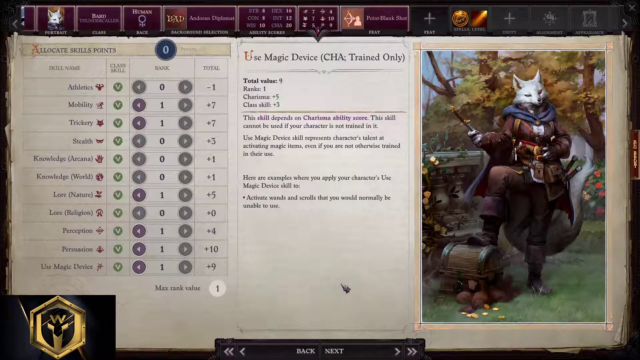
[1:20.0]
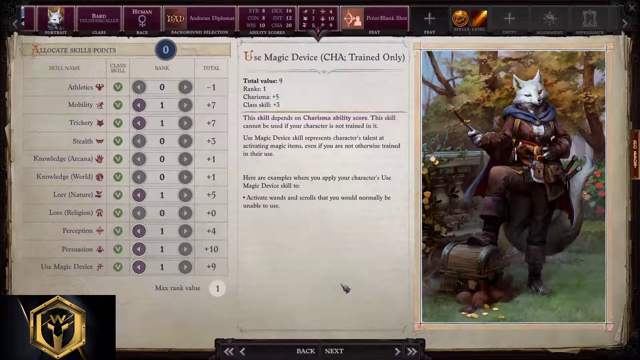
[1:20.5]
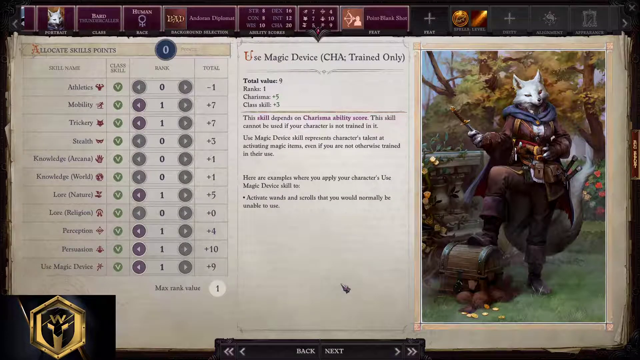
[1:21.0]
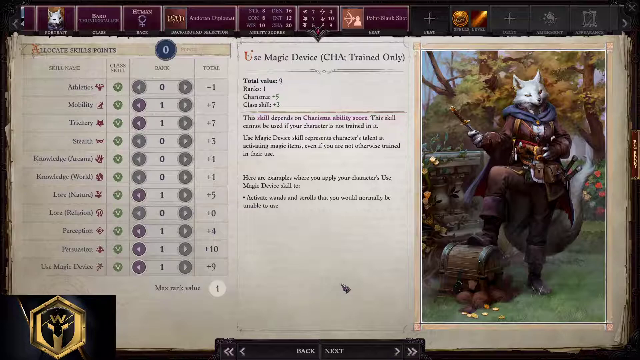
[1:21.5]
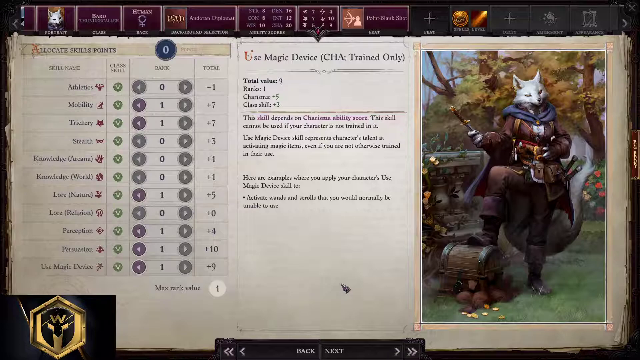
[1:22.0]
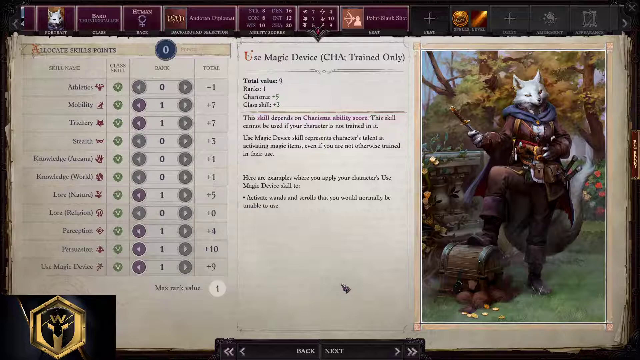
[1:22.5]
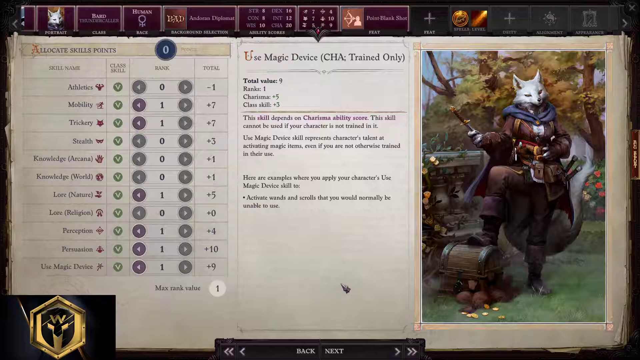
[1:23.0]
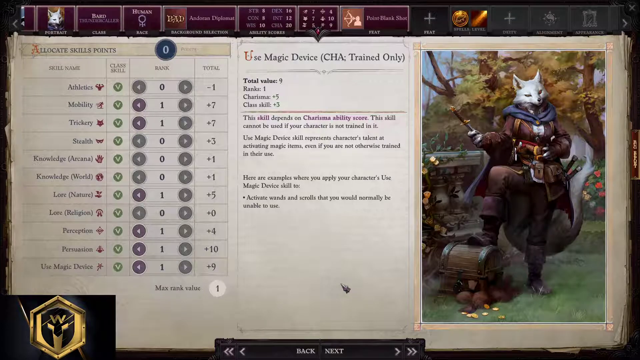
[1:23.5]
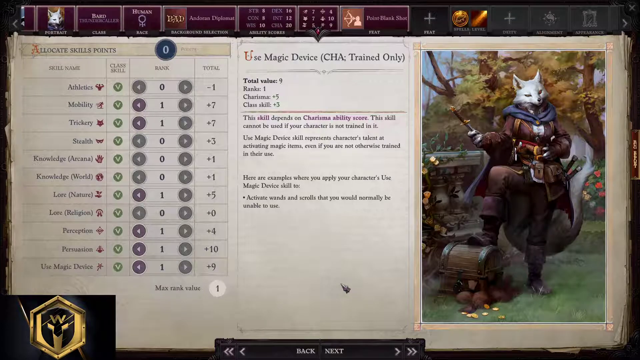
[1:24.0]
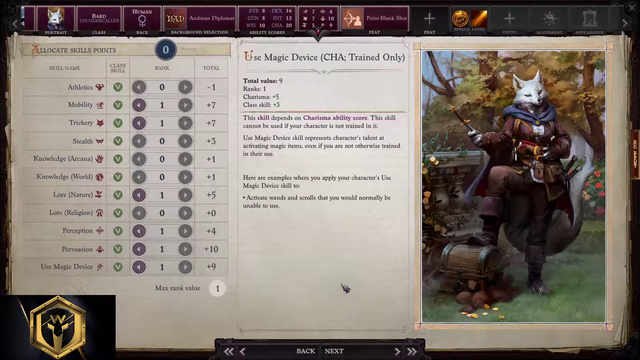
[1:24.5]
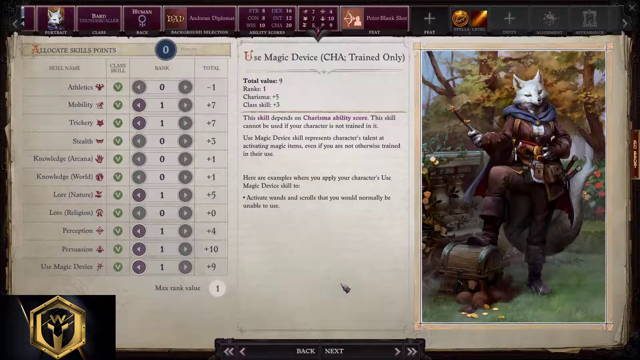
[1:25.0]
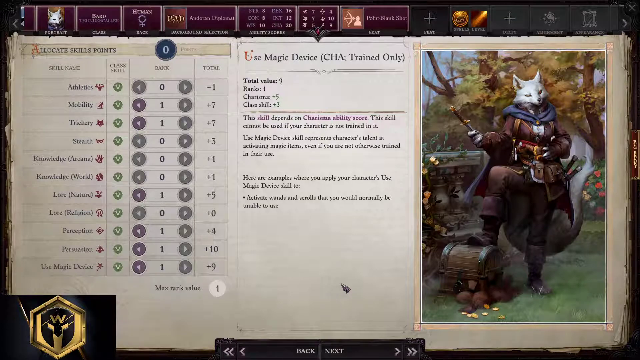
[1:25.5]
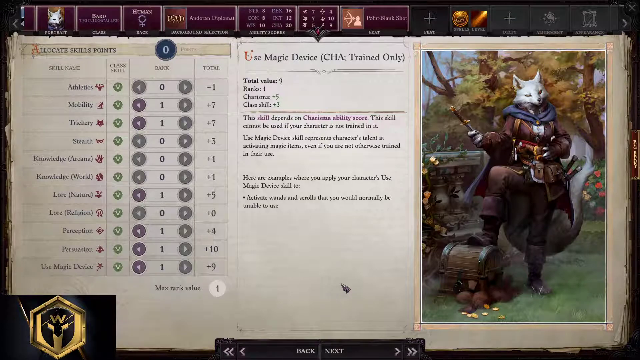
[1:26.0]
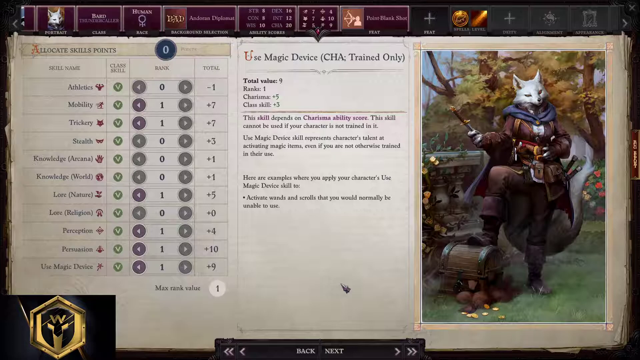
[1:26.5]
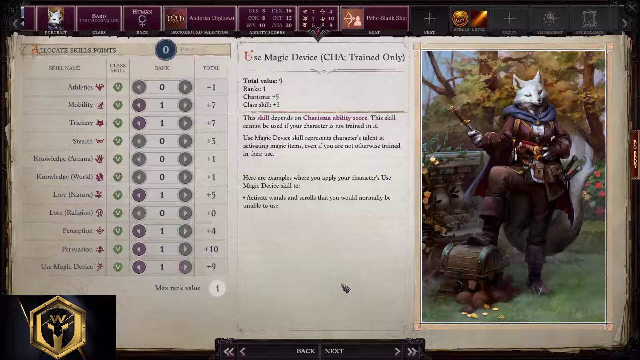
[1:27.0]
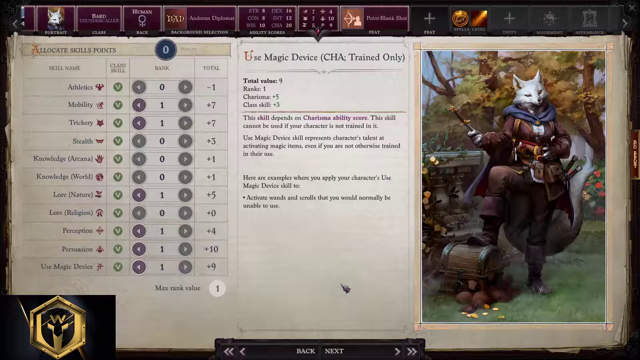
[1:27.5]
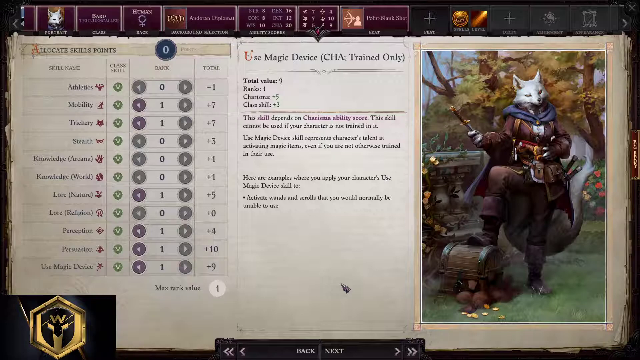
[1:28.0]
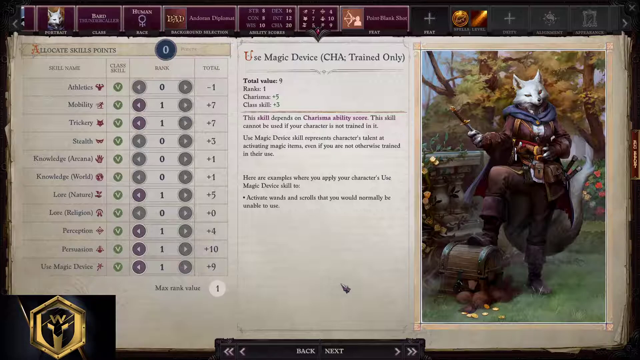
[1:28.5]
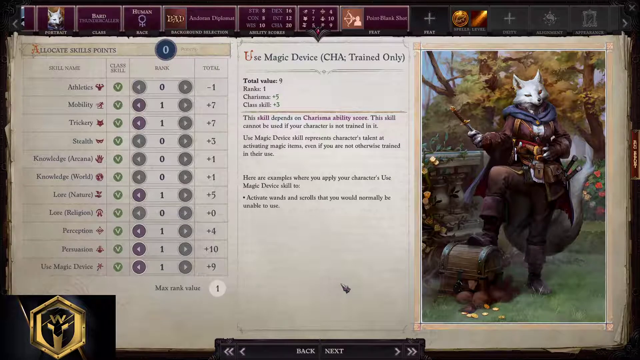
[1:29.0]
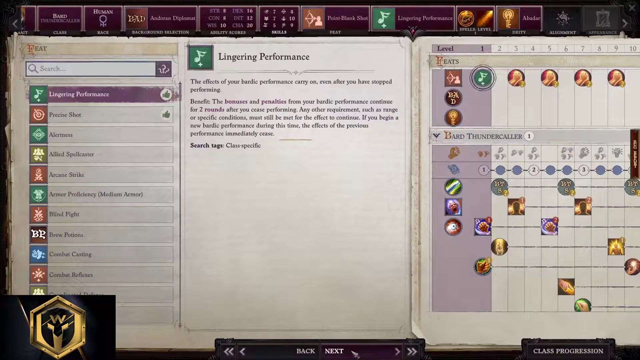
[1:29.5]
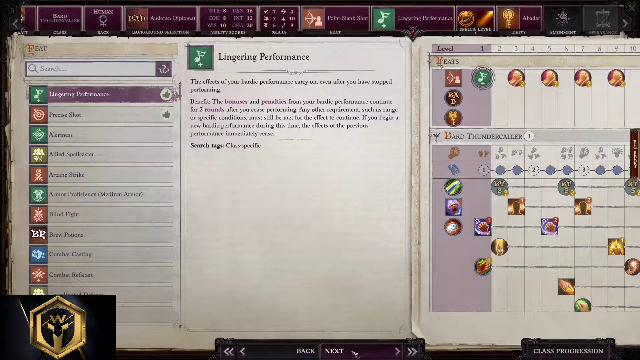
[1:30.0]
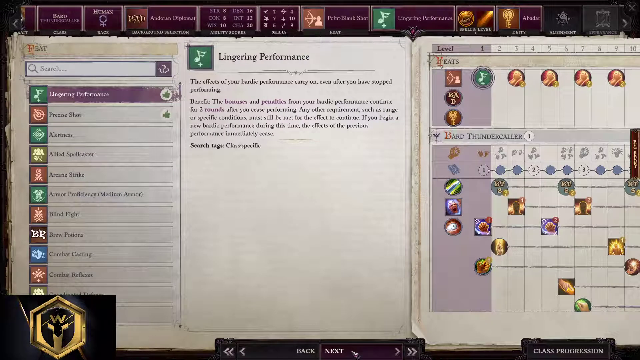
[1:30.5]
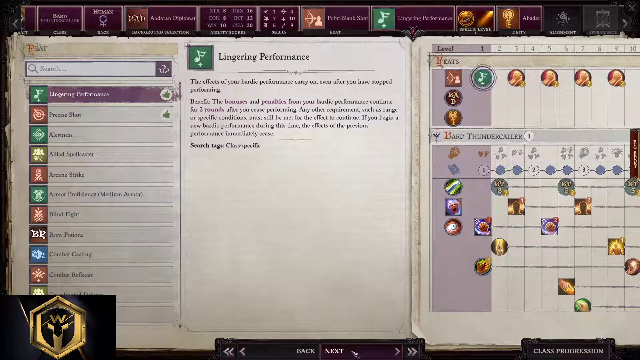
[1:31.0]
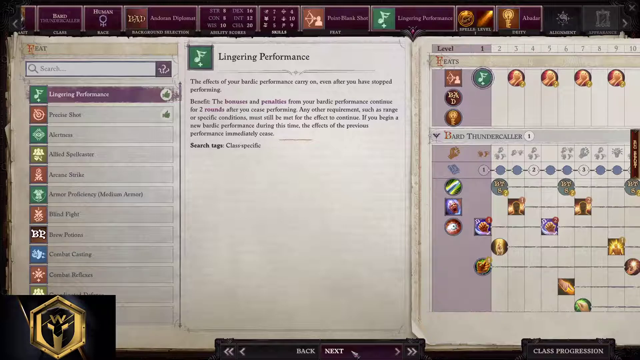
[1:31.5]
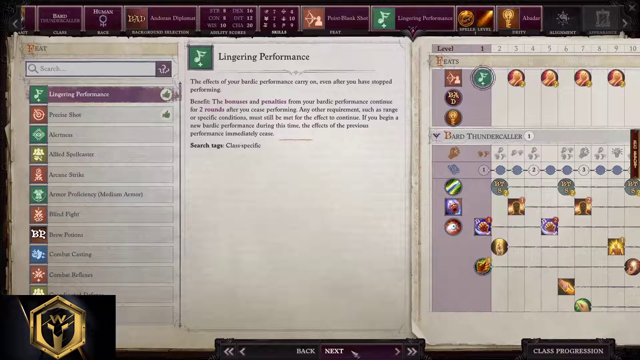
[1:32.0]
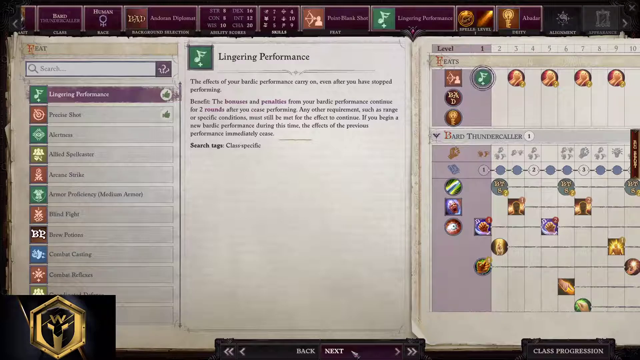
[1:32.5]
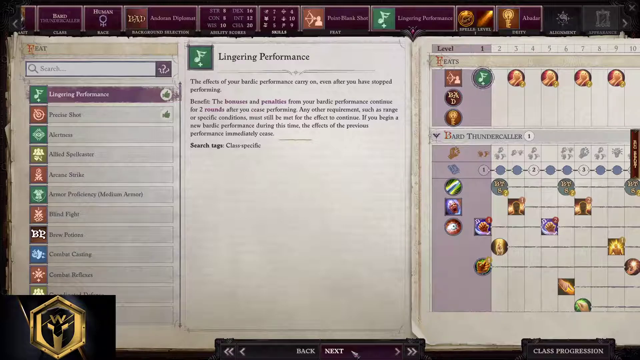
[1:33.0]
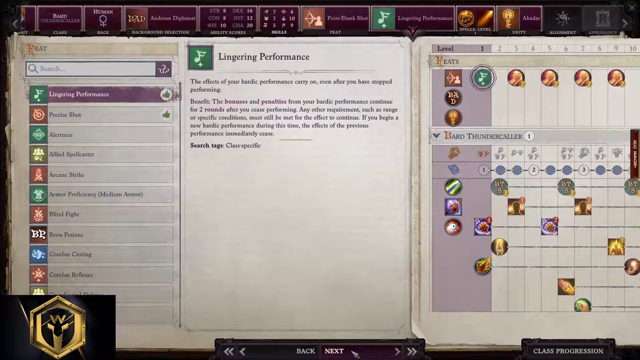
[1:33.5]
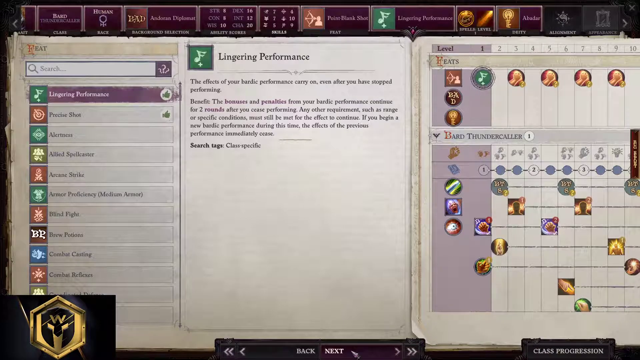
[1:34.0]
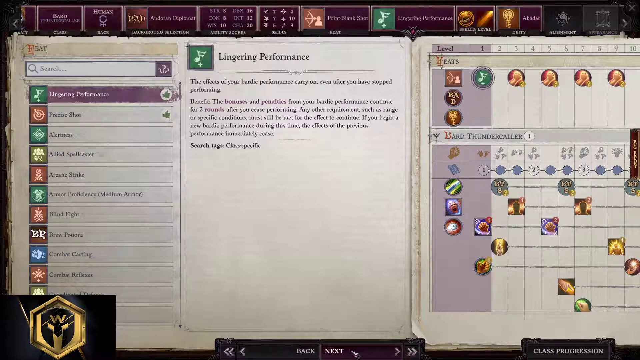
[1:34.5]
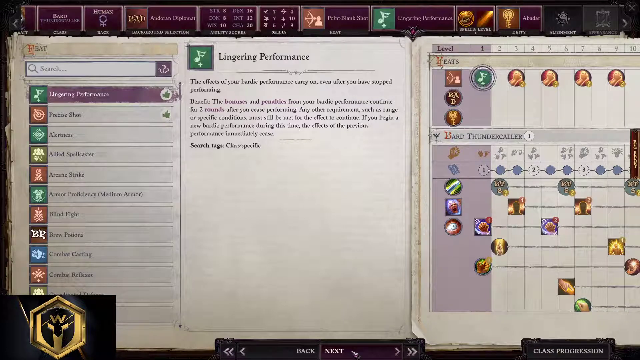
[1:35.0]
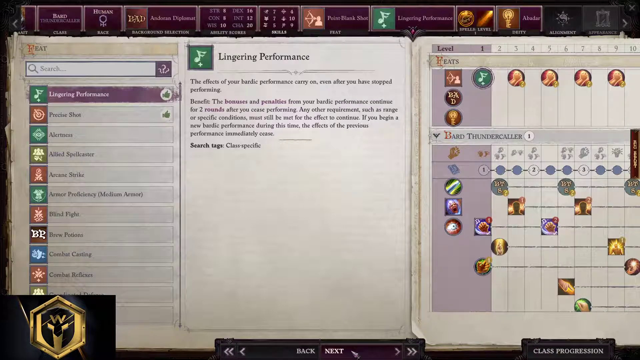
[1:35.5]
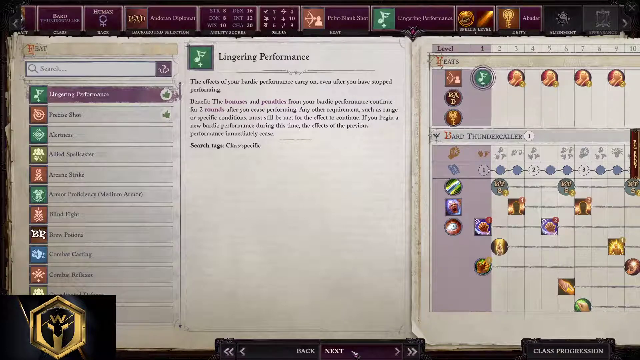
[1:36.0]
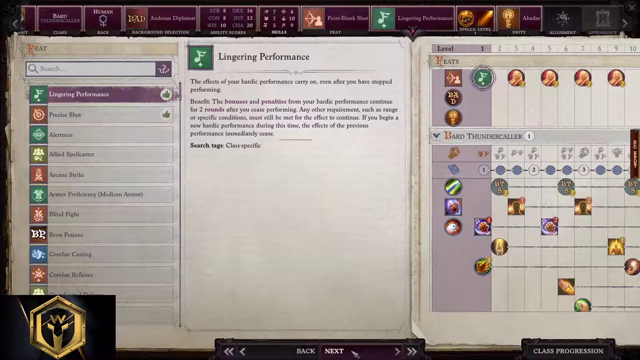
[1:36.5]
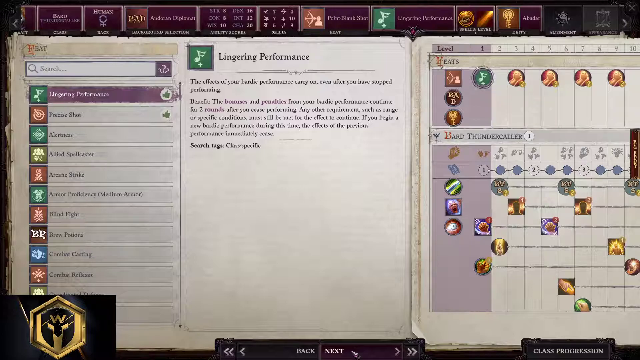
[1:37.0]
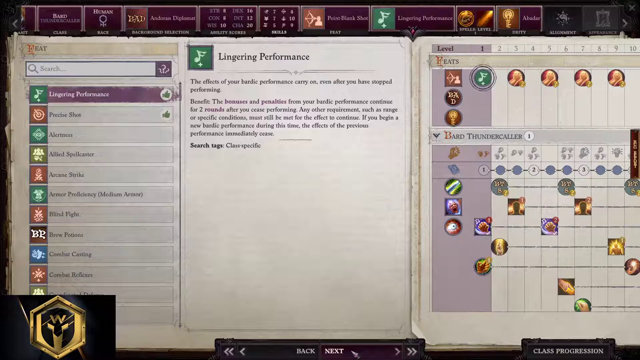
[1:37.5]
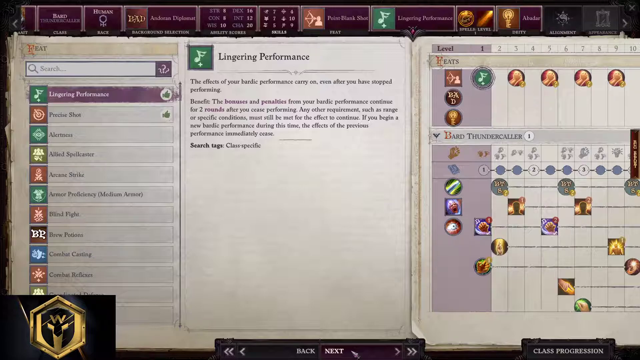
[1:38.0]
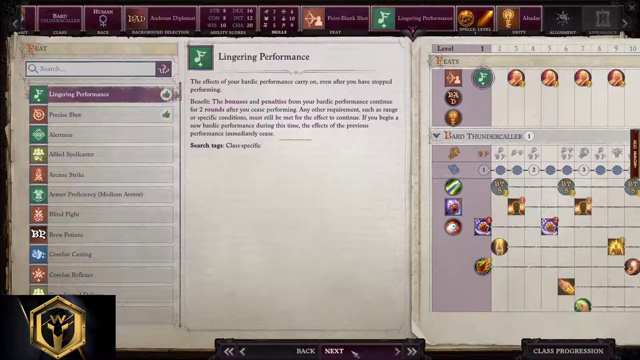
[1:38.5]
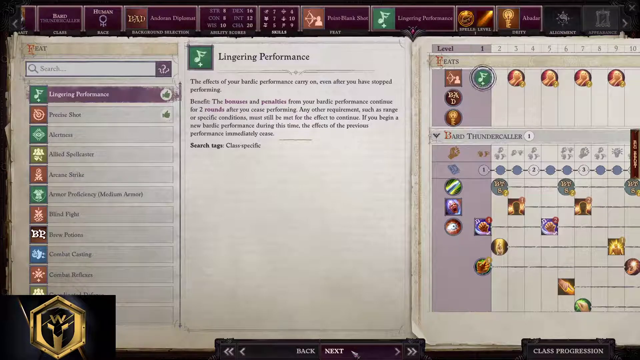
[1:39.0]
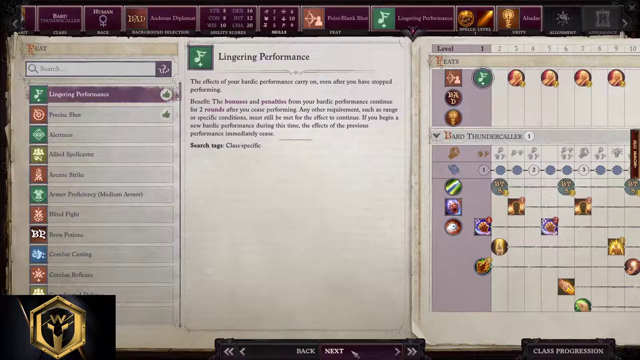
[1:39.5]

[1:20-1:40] A chart on the left side of the video game screen says "allocate skills points" and lists the skills athletics, mobility, trickery, stealth, knowledge arcana, knowledge world, lore nature, lore religion, perception, persuasion and use magic device, along with portrait, class, race and background selection: the portrait is a white fox, the class is bard thundercaller, the race is human and the background selection is Andorran Diplomat. To the right it shows "use magic device", cha, trained only, total value 9, ranks 1, charisma +5, class skill +3, and the text "This skill depends on charisma ability score. The skill cannot be used if your character is not trained in it. Use magic device skill represents characters talent at activating magic items, even if you're not otherwise trained in their use." It continues with examples of where the skill applies, including "Activate wands and scrolls that you would normally be unable to use."